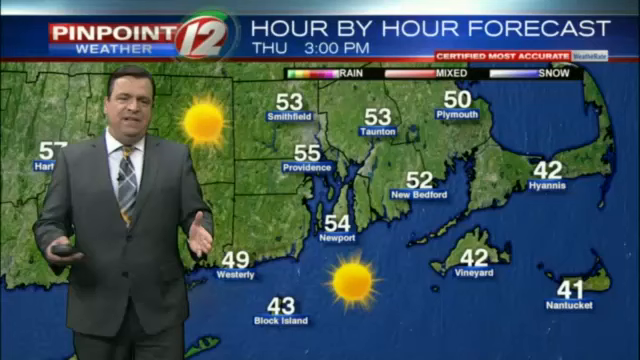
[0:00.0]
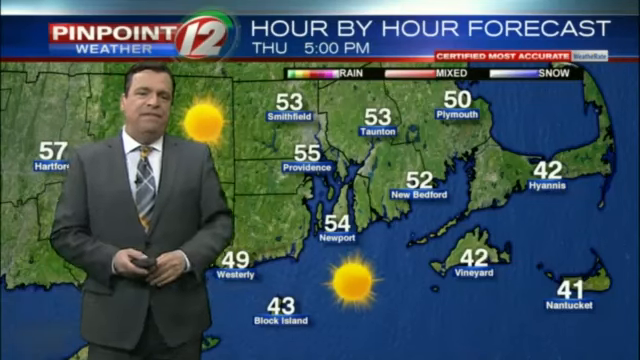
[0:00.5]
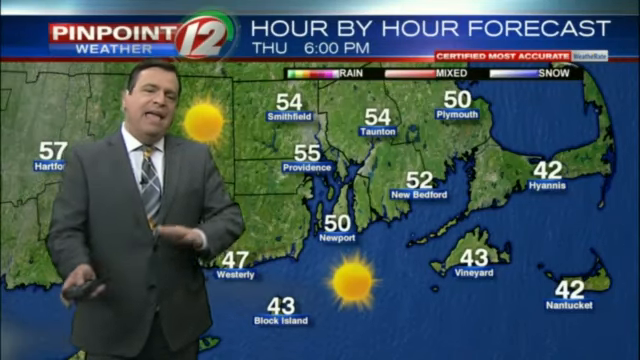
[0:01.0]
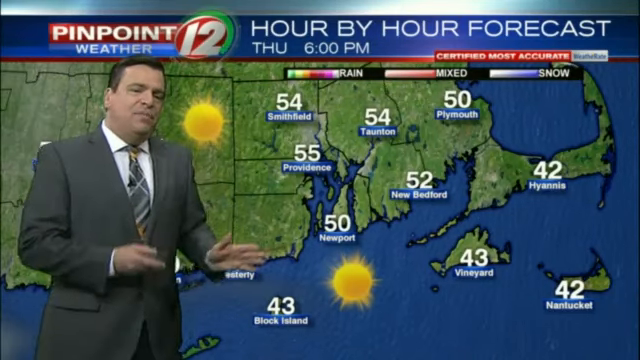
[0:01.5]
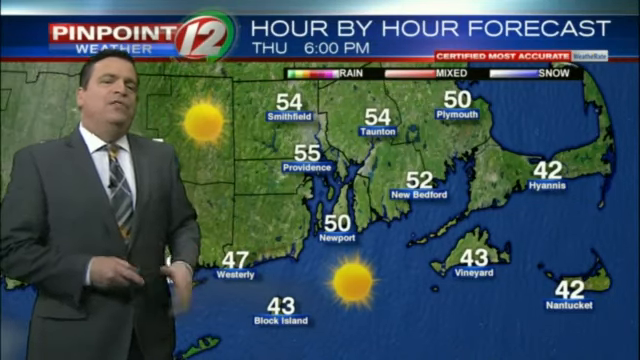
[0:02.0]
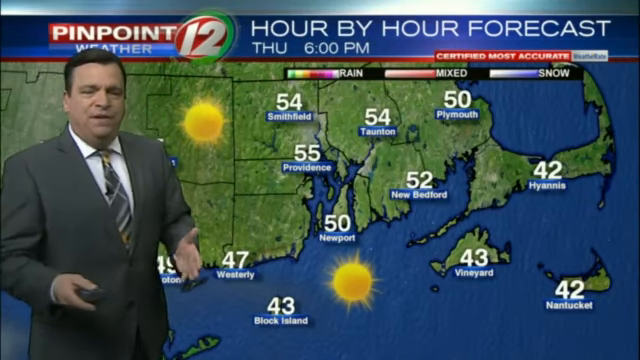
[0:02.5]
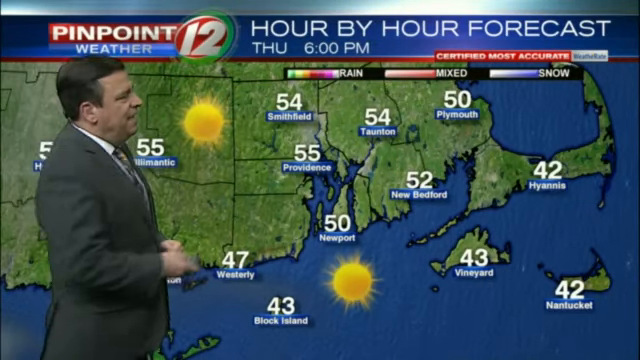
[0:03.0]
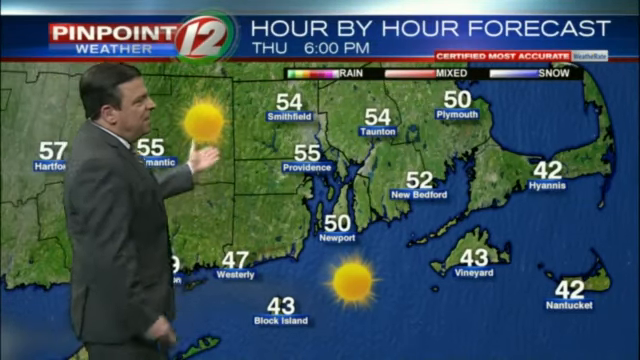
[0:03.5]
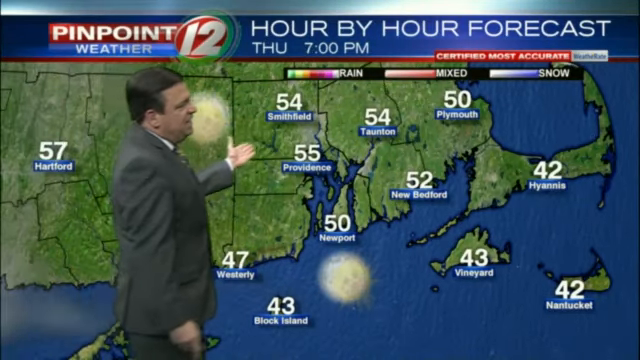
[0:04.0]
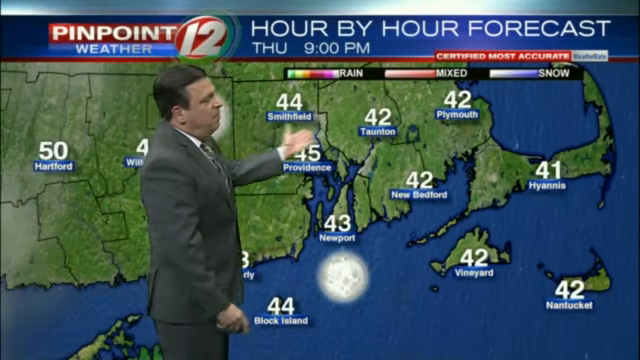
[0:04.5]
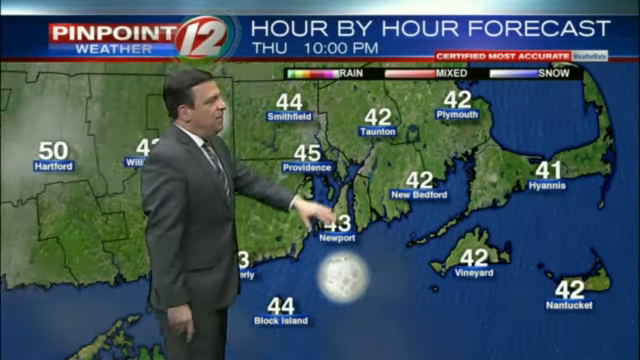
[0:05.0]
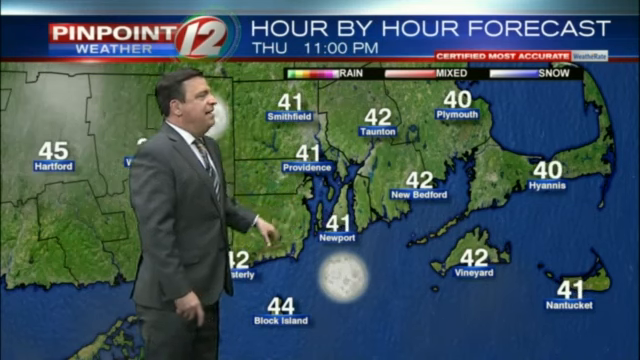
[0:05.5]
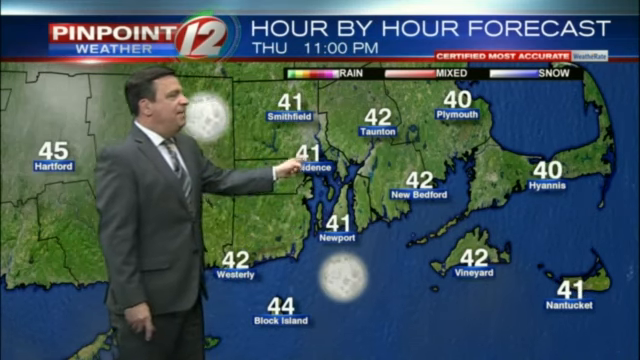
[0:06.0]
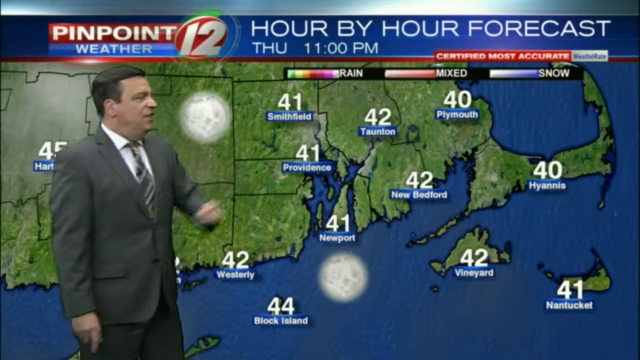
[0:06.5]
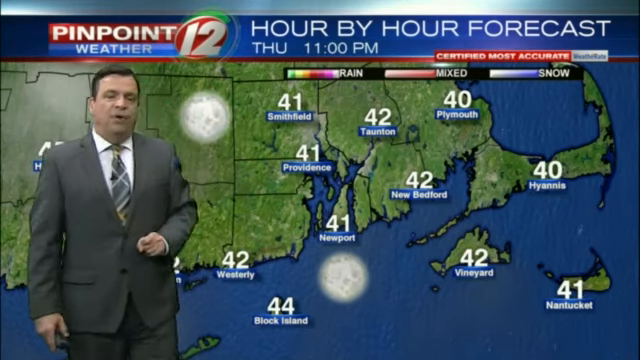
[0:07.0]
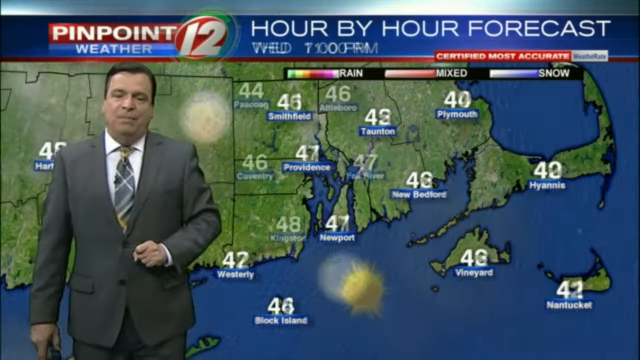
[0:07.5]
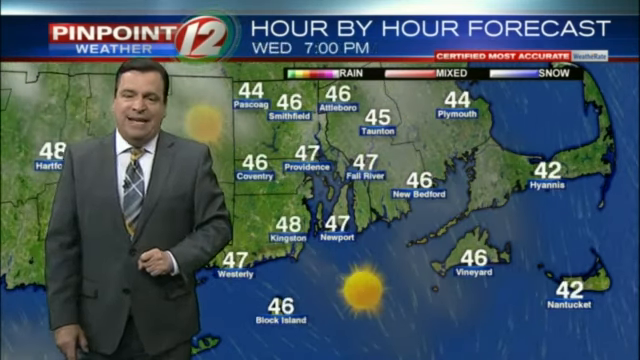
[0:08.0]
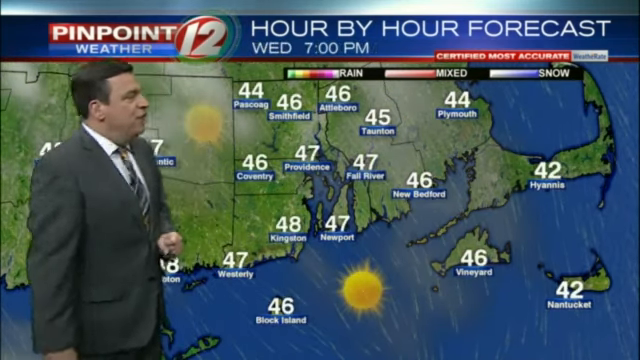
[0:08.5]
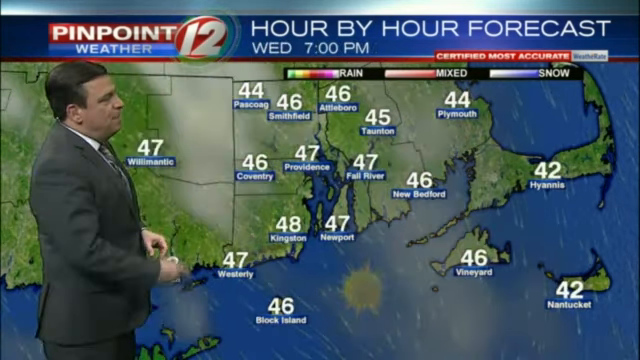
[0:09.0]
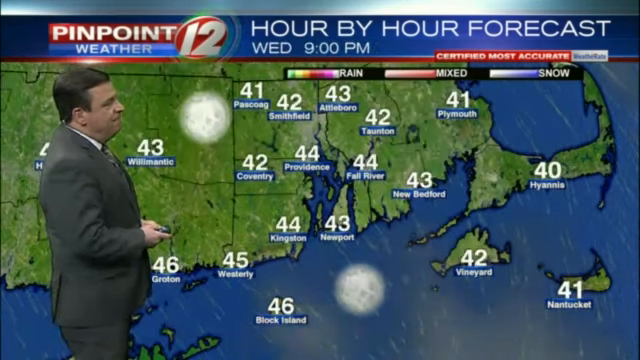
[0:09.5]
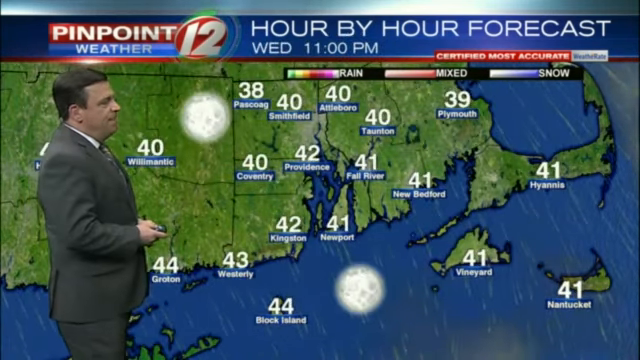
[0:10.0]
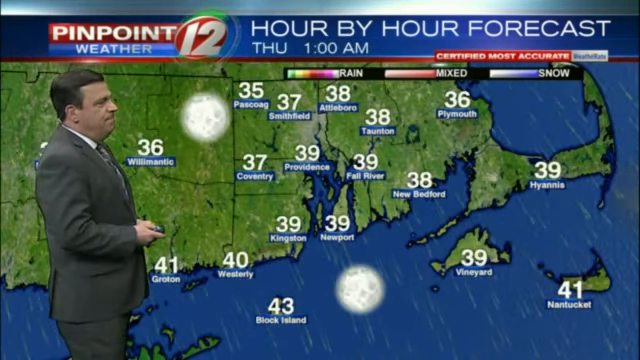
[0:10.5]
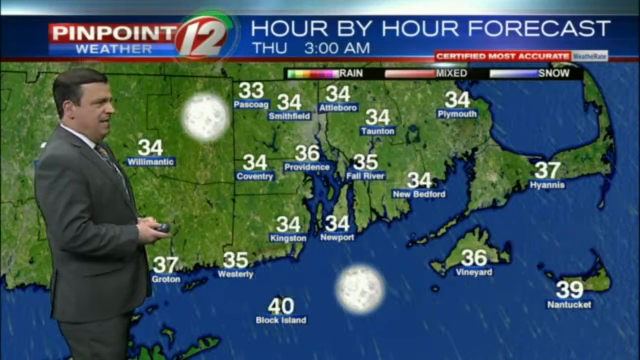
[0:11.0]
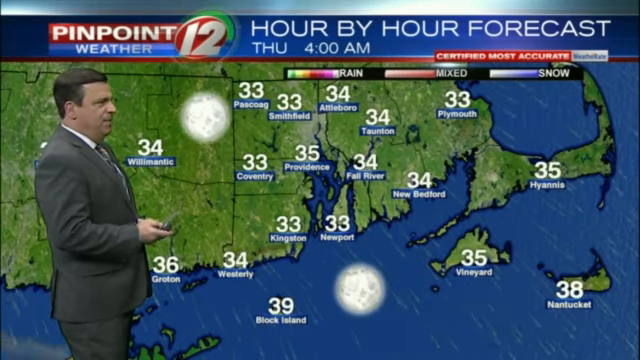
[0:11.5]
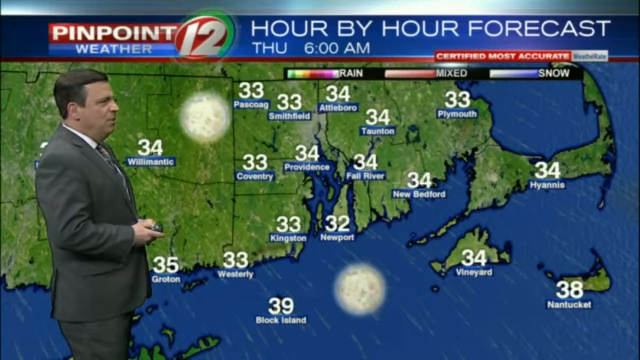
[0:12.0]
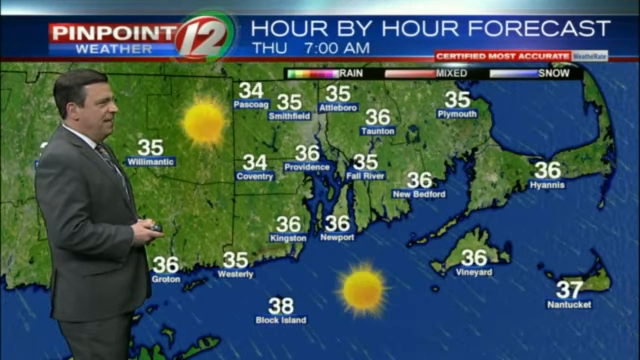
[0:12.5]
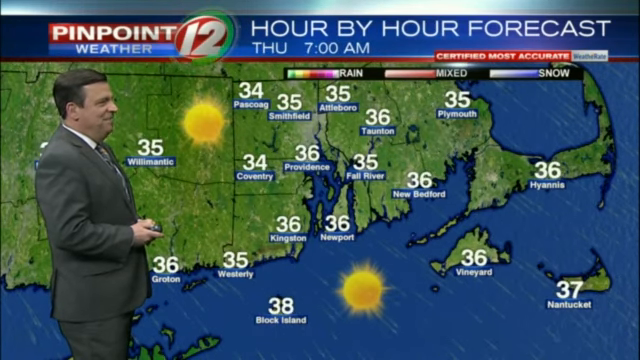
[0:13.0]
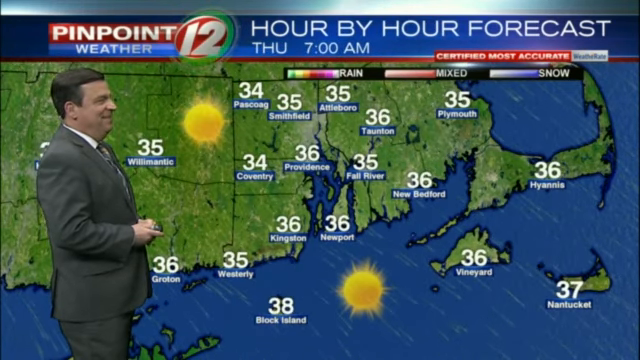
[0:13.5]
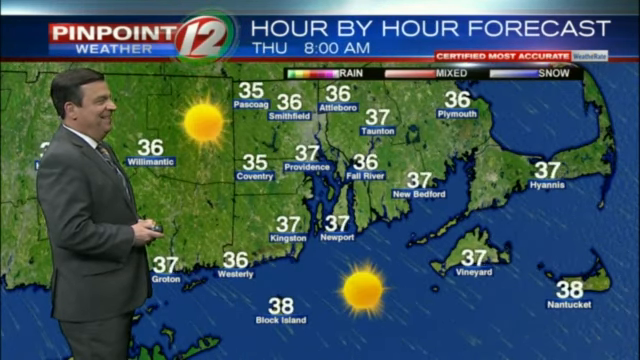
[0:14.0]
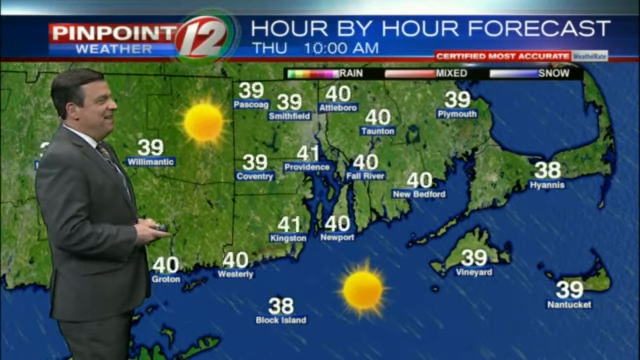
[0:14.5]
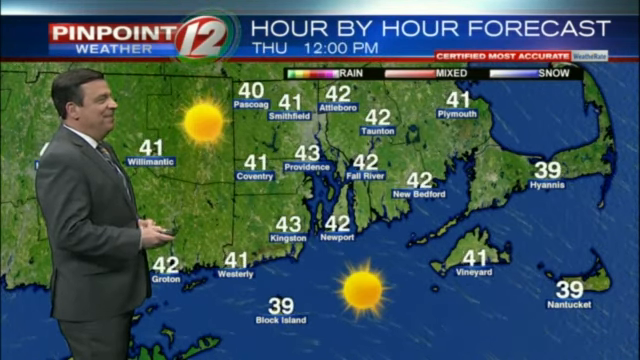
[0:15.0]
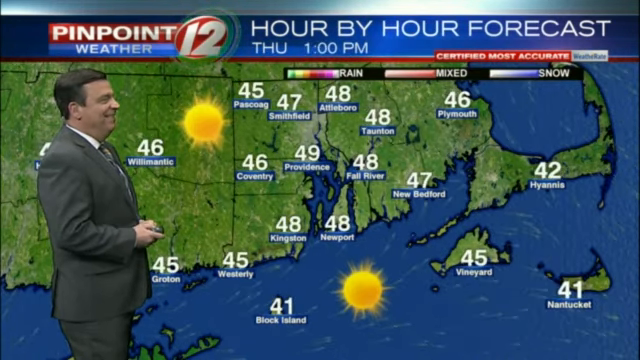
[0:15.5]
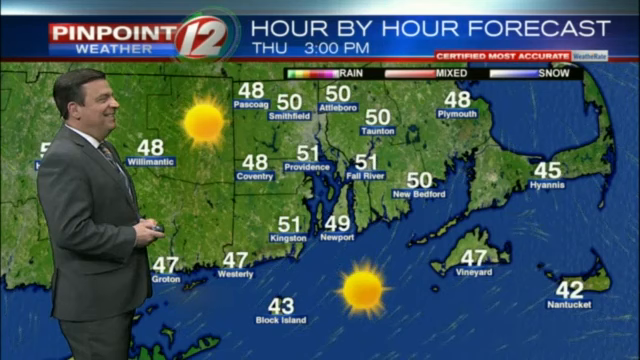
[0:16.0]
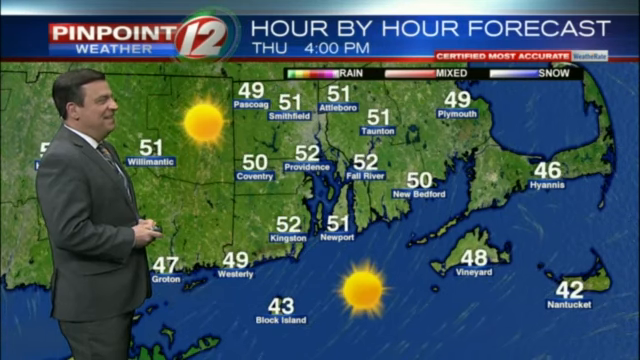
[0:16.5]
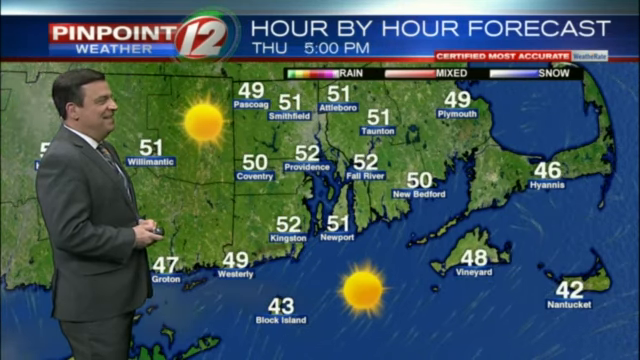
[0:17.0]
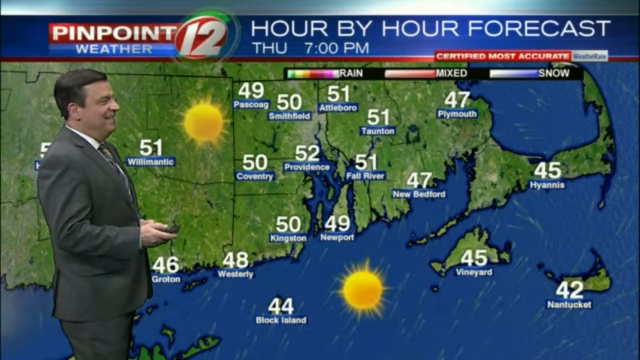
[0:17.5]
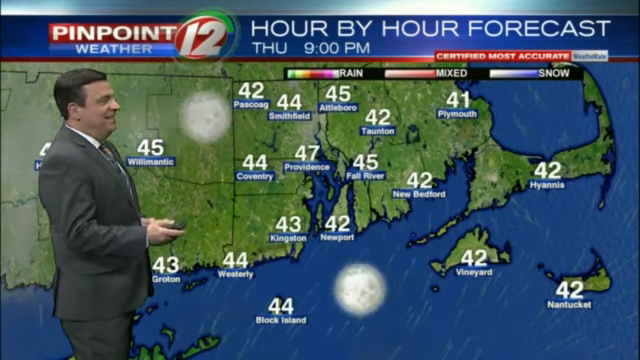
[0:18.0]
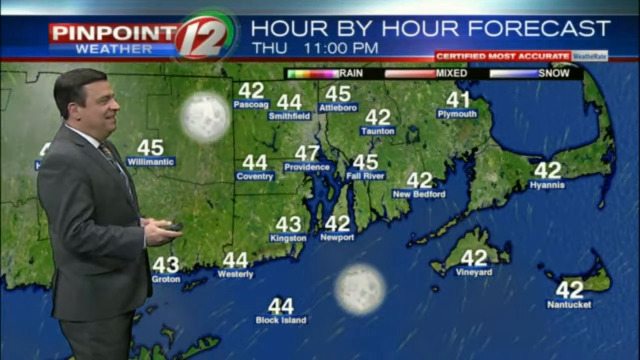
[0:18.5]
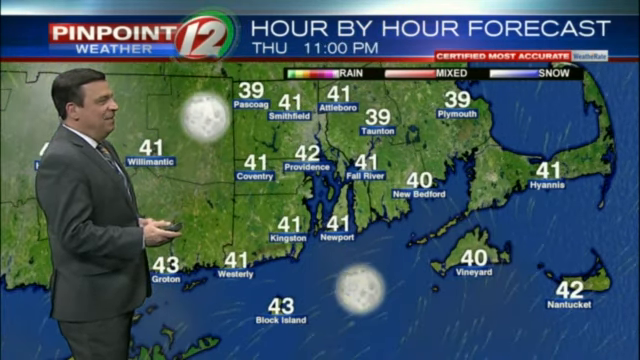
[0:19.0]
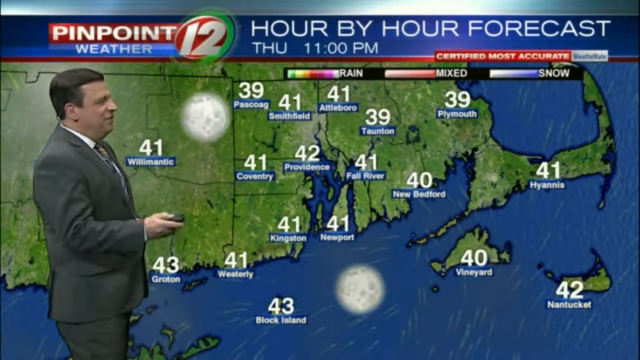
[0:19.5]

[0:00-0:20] A weatherman stands in front of a green map showing the weather for different locations, apparently in New England. Place names on the map include Nantucket, Martha's Vineyard, Hartford, Smithfield, Plymouth, New Bedford, Newport, Block Island, and others. The temperatures are low, all in the mid 40s. He gestures and points toward the camera, talking and moving around, sometimes facing the camera and sometimes facing away from it. Yellow suns appear on the screen, along with what look like wind markers that go off the map. He shows the temperature as it rises throughout the day, clicking a little black machine to make this happen. The temperatures go up from the low 40s to the mid to high 40s, and then down to the low 30s. The time and date appear above as the temperature rises. Blue water and clouds surround the land, and the moon is visible.